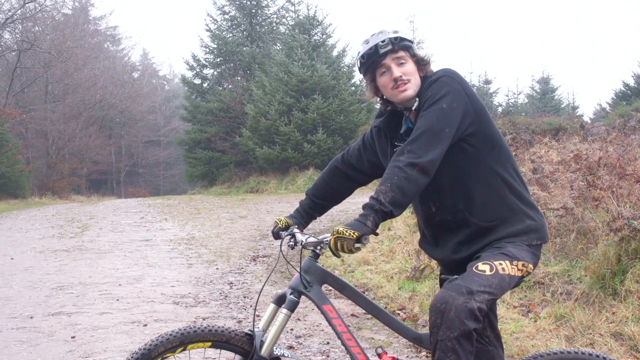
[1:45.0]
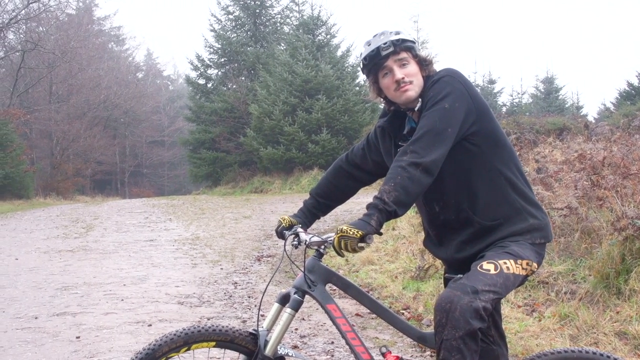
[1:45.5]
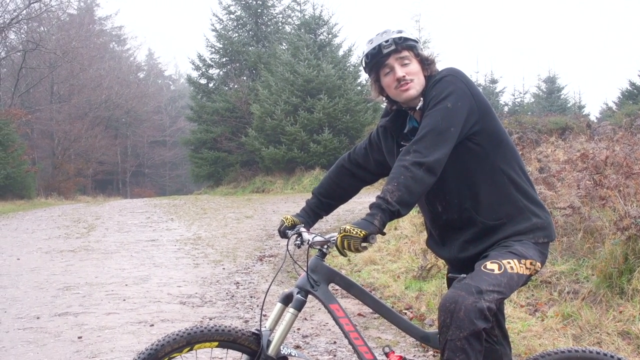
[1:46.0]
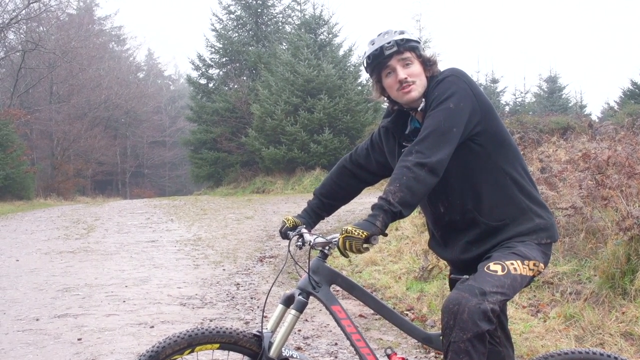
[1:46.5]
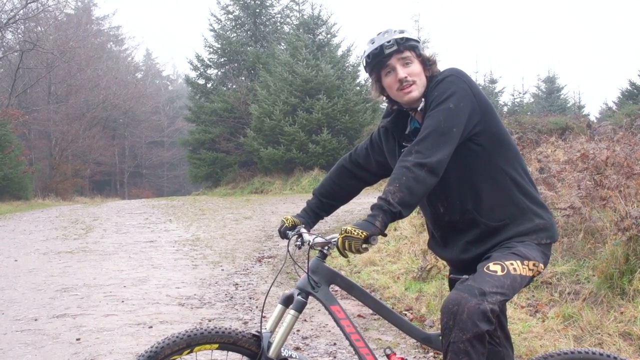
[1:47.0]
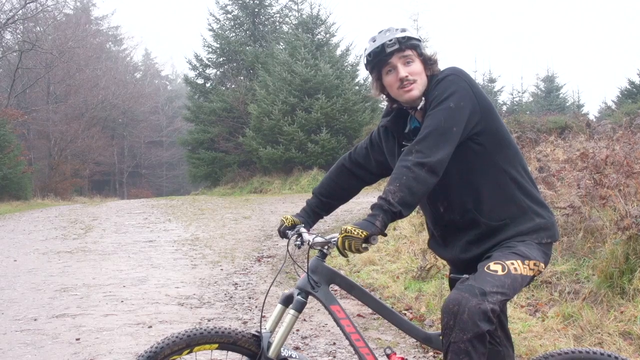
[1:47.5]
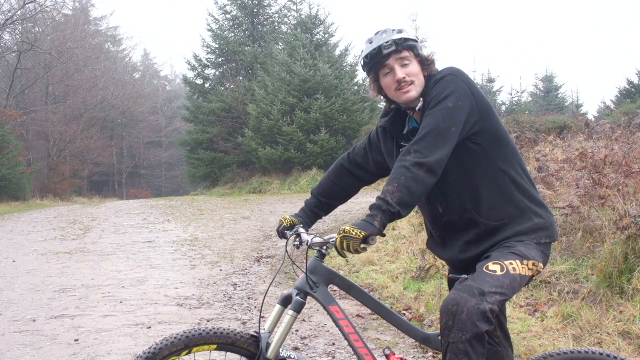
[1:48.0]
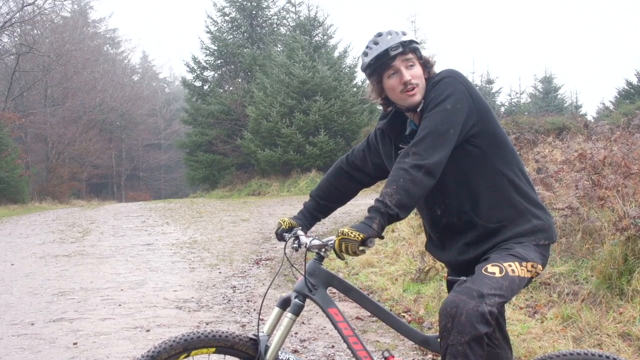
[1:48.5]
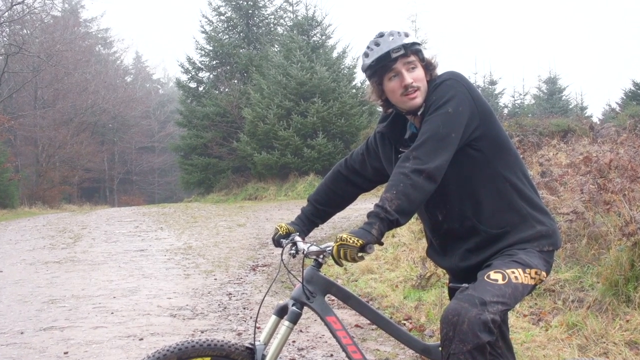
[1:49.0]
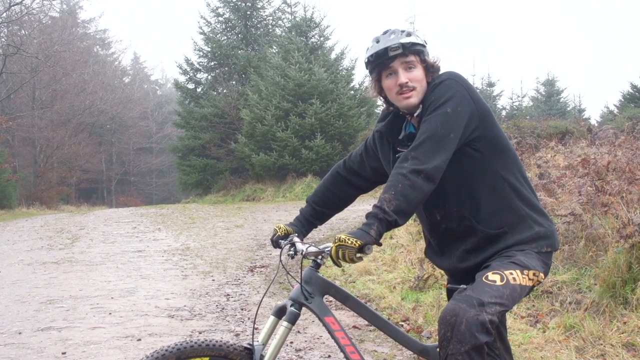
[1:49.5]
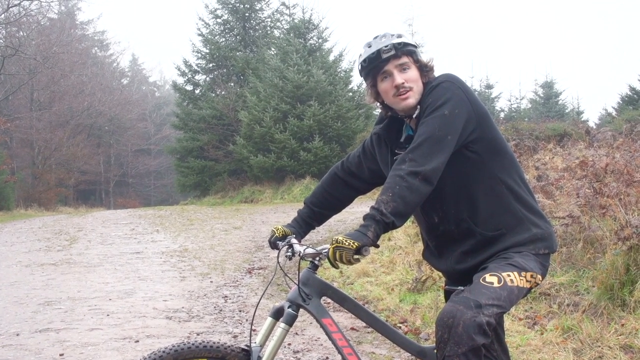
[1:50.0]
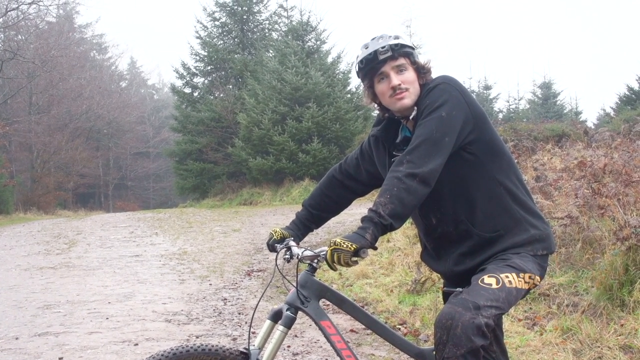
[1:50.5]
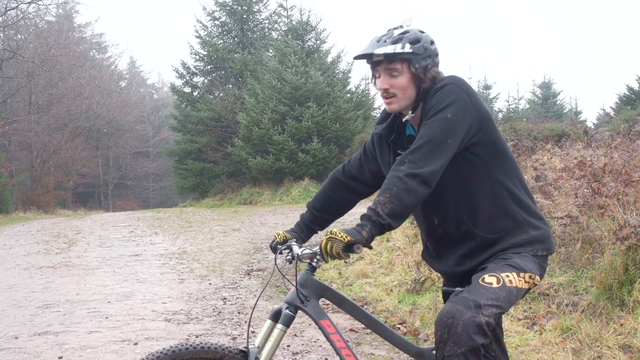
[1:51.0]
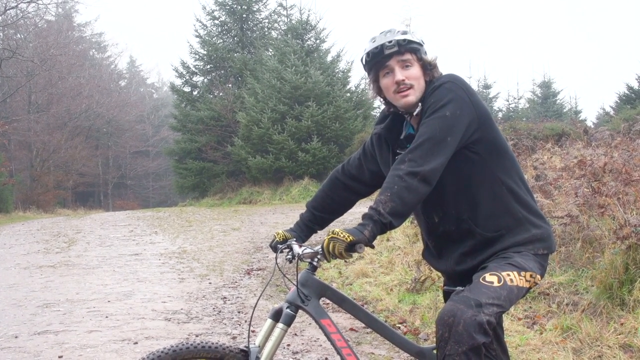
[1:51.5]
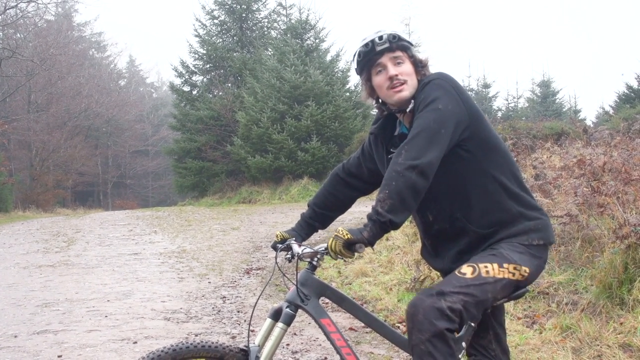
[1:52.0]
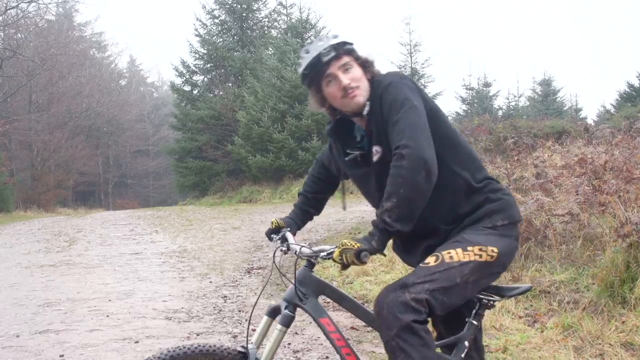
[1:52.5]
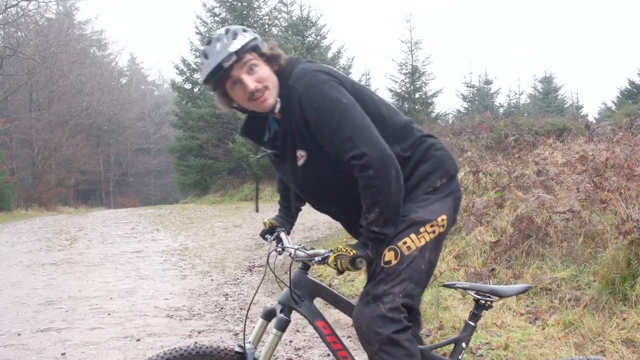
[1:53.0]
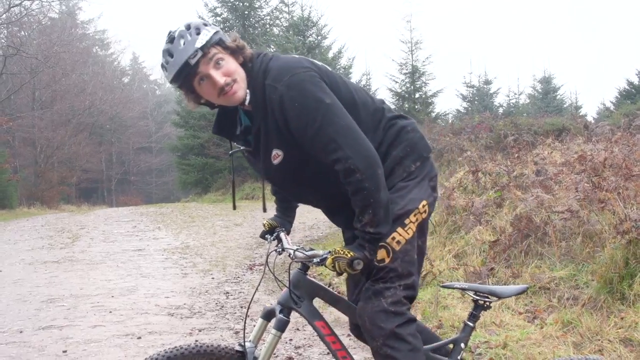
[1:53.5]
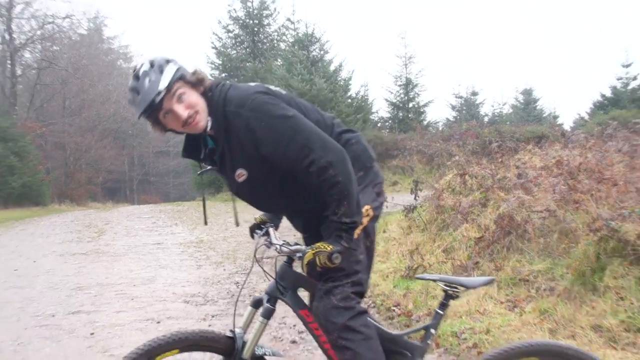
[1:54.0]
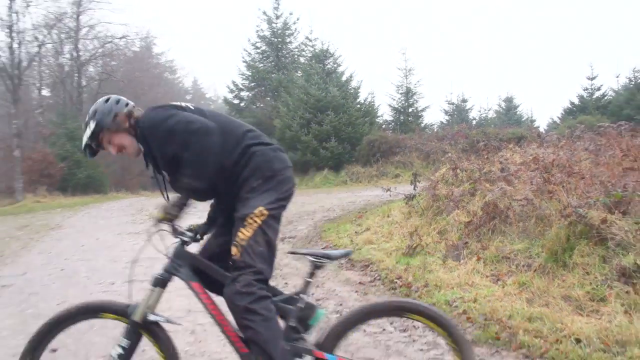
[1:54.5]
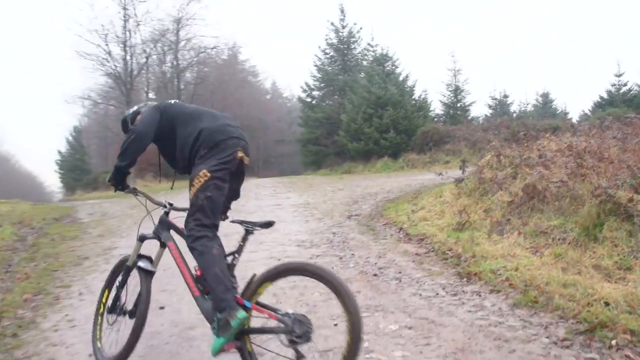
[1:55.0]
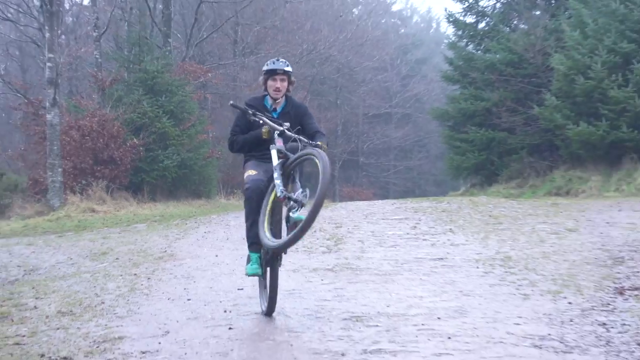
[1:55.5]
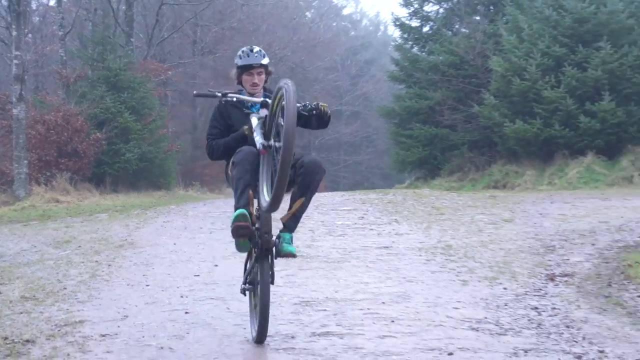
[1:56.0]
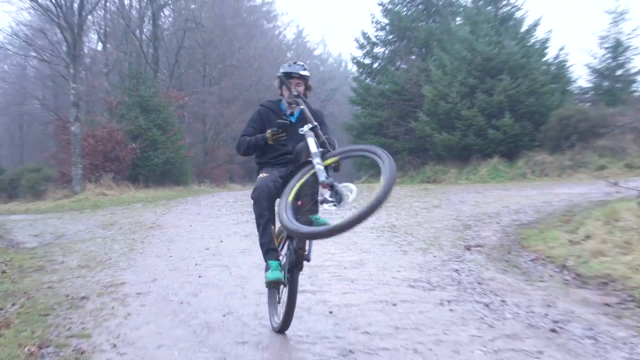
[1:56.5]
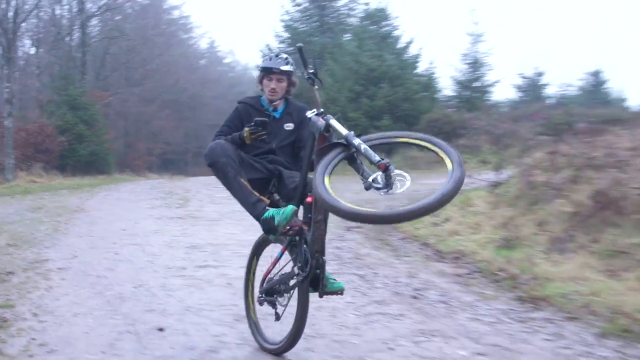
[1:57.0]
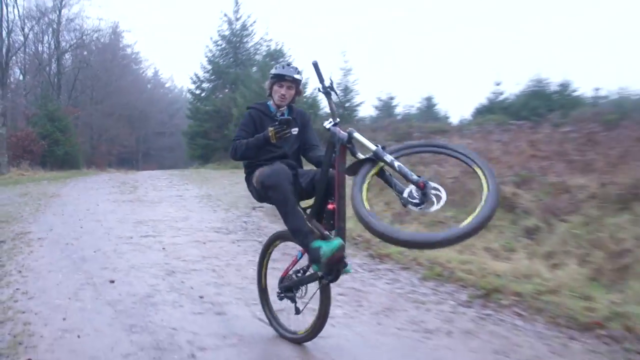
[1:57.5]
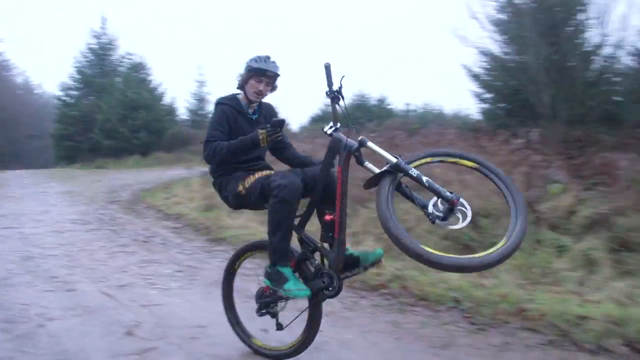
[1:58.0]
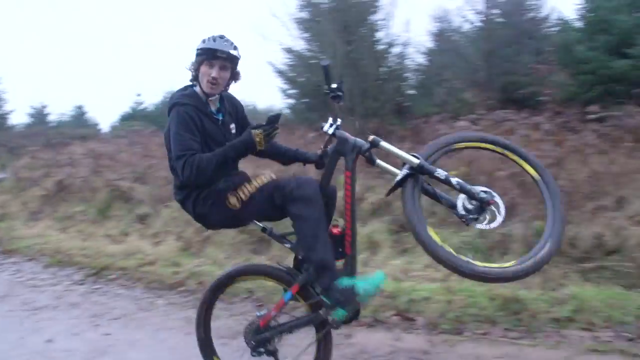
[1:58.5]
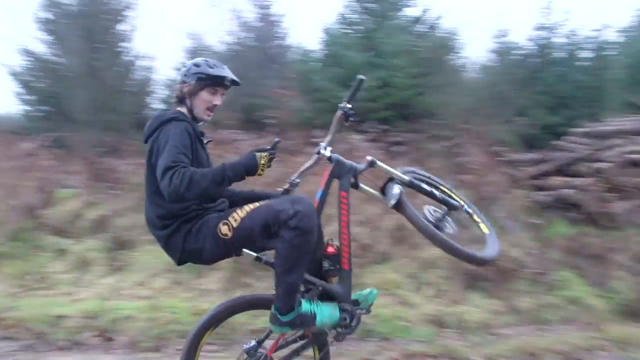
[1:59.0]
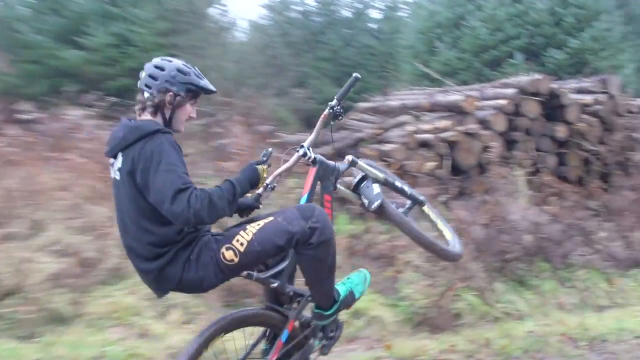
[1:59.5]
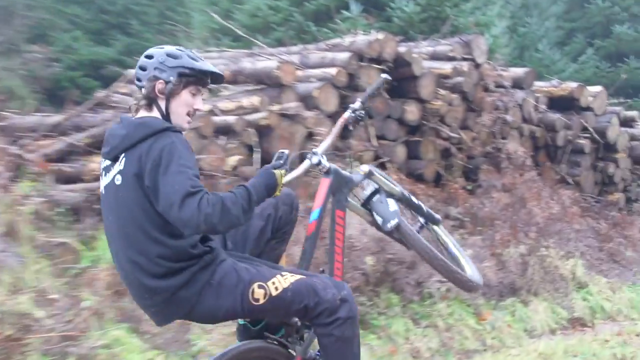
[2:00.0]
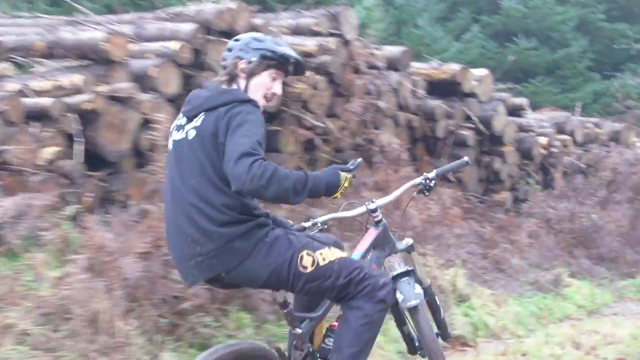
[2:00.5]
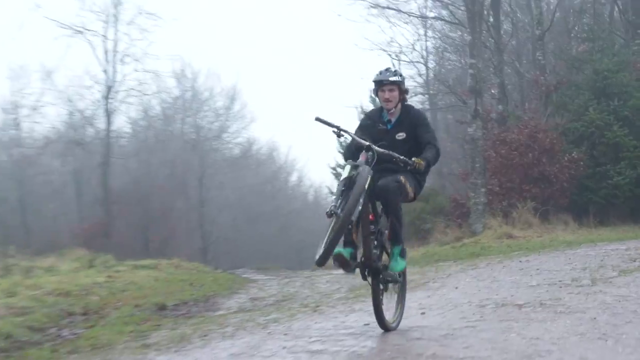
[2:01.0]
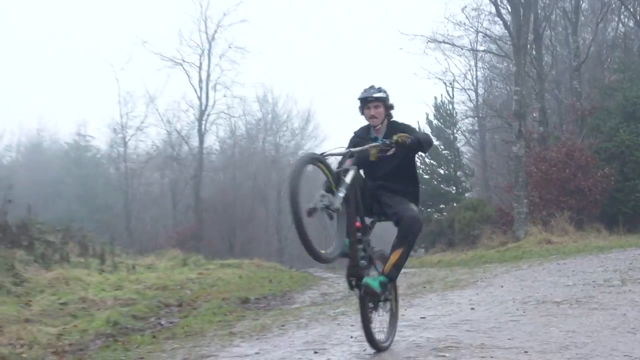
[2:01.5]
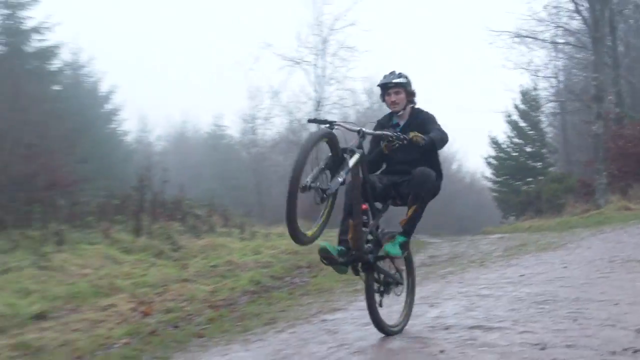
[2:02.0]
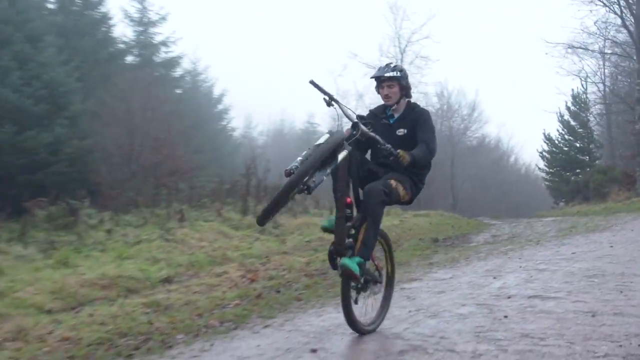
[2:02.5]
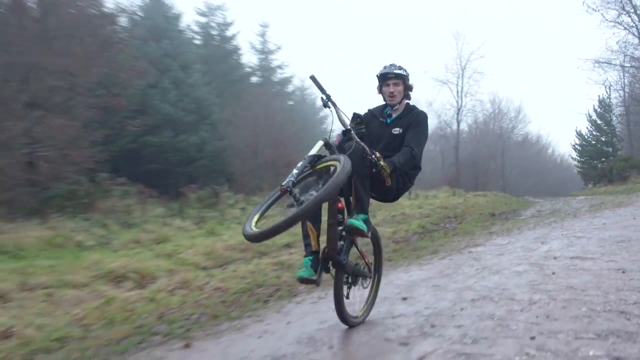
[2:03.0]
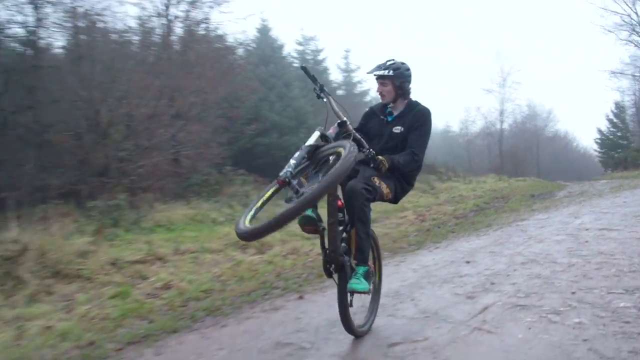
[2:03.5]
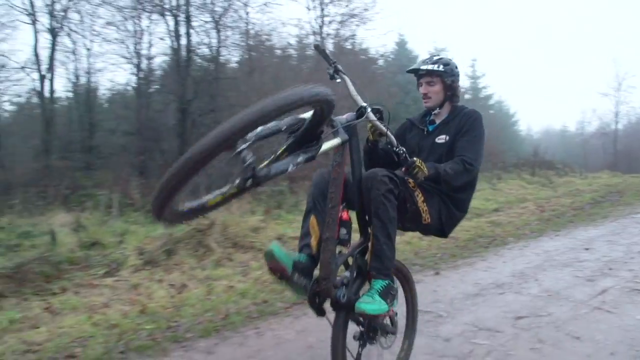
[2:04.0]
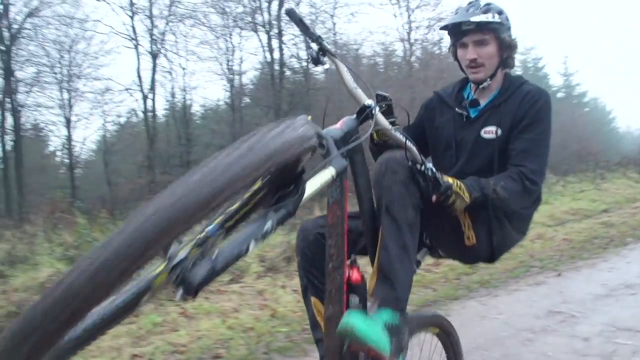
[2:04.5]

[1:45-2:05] The word "bliss" is visible on the guy's pants. He is on his phone while popping a wheelie down the road or hill, which makes him look distracted. He has one hand on the phone and one on the handlebar, with the front tire in the air and still spinning. He raises the handlebar up, then points it down once the tire is in the air, and keeps pedaling as the back tire carries him down the road.